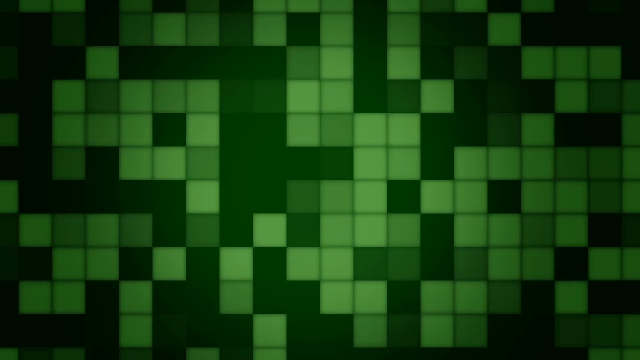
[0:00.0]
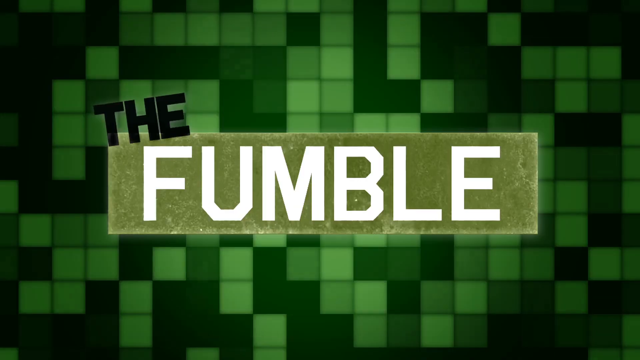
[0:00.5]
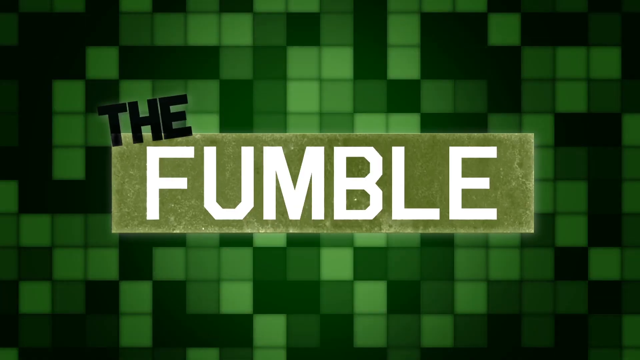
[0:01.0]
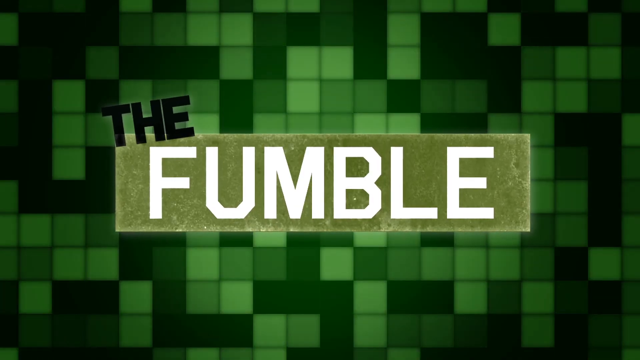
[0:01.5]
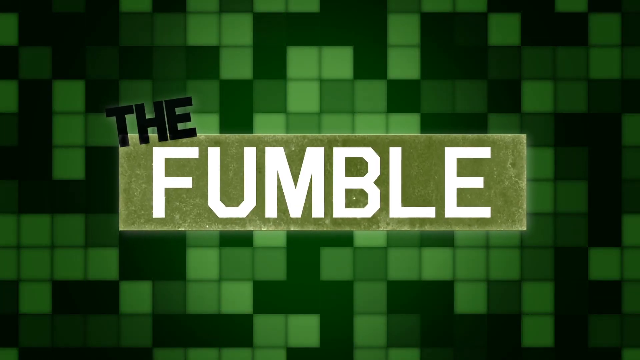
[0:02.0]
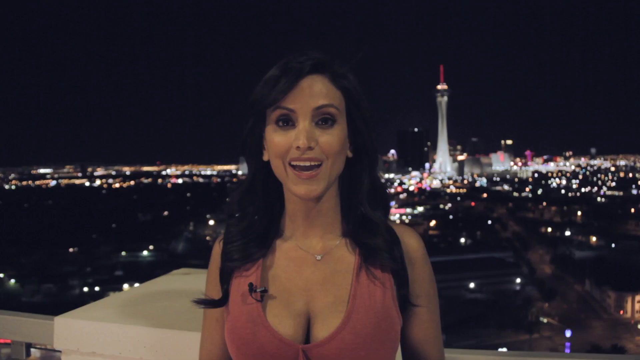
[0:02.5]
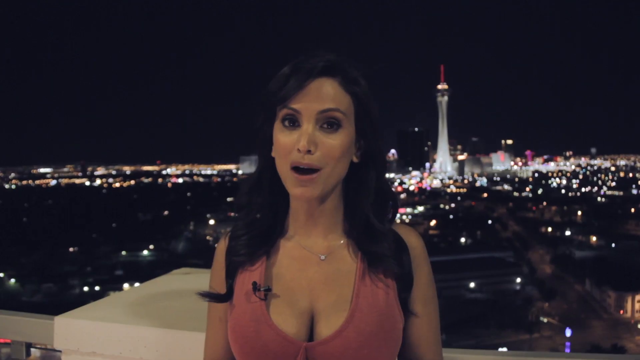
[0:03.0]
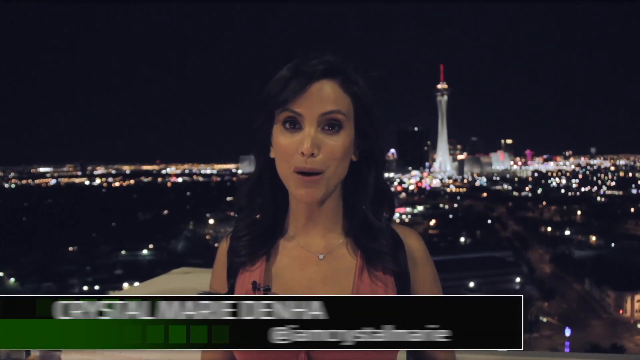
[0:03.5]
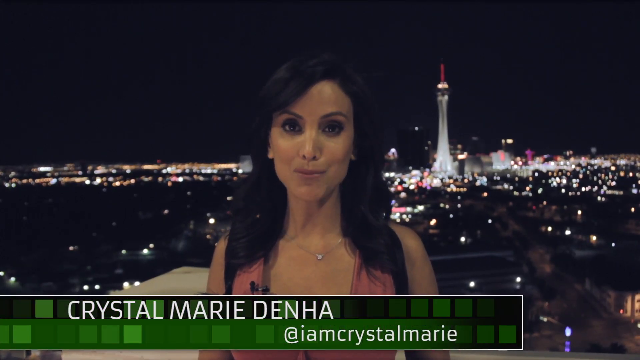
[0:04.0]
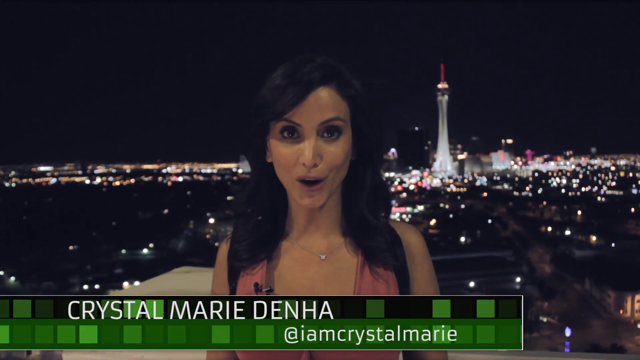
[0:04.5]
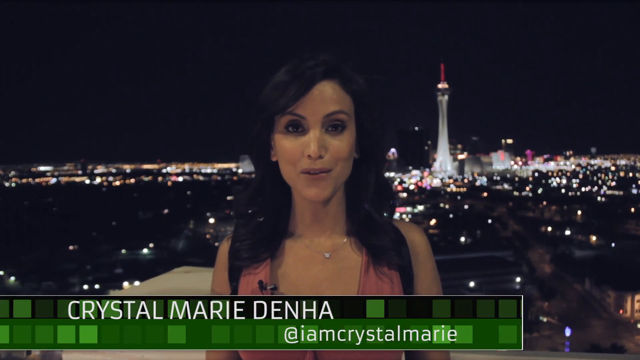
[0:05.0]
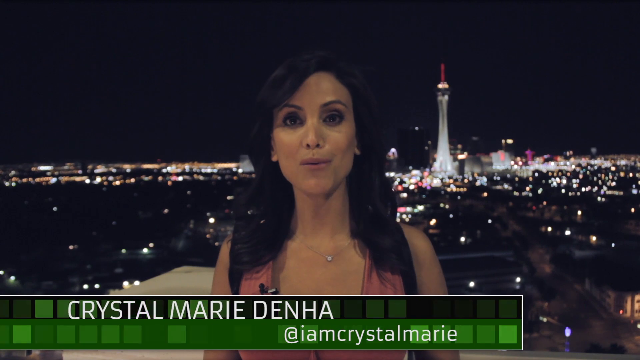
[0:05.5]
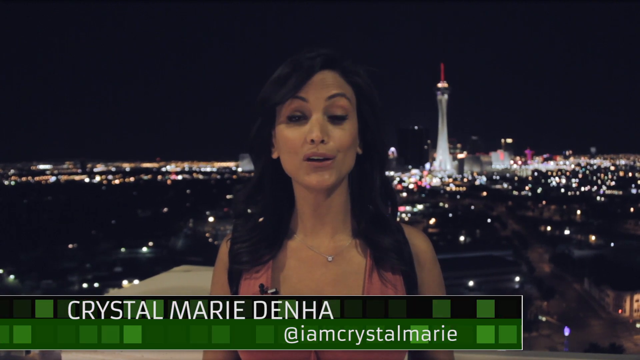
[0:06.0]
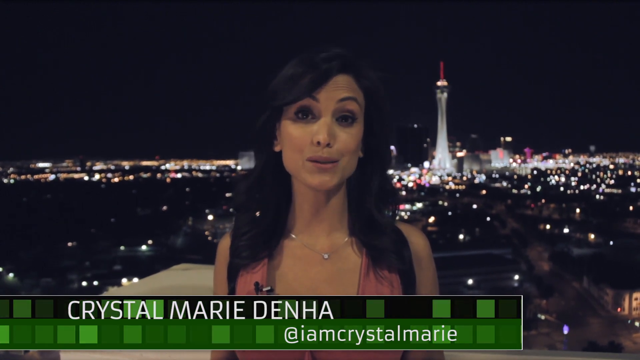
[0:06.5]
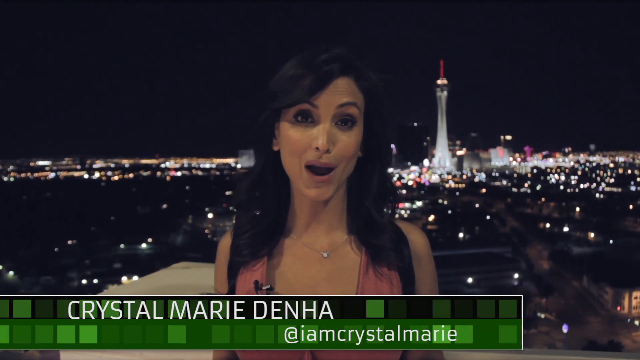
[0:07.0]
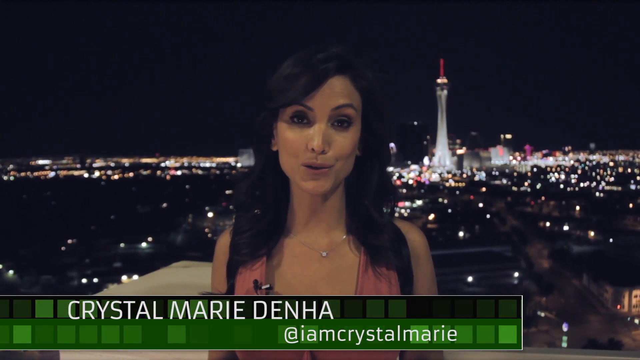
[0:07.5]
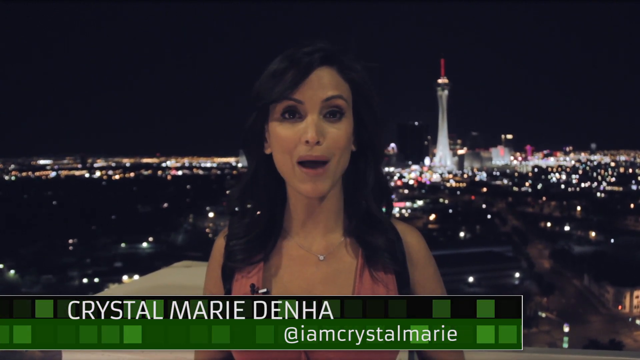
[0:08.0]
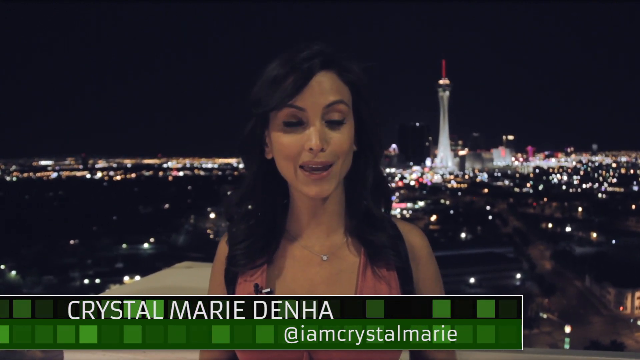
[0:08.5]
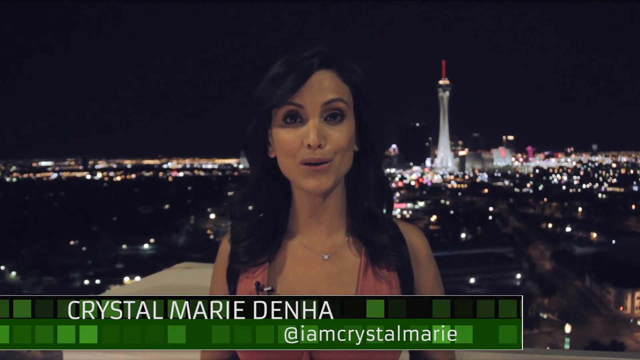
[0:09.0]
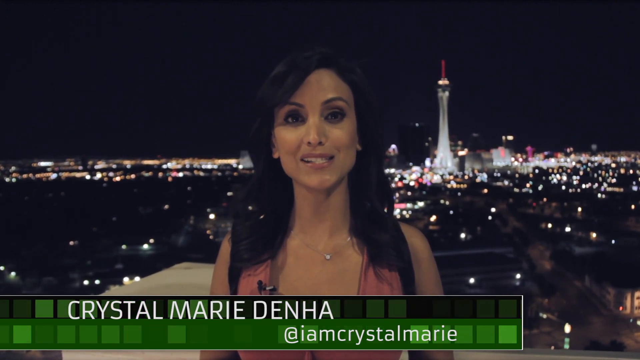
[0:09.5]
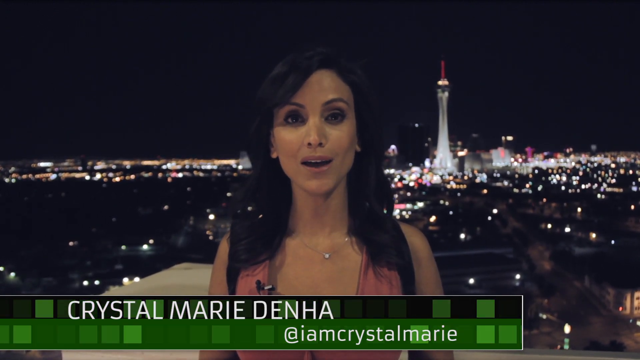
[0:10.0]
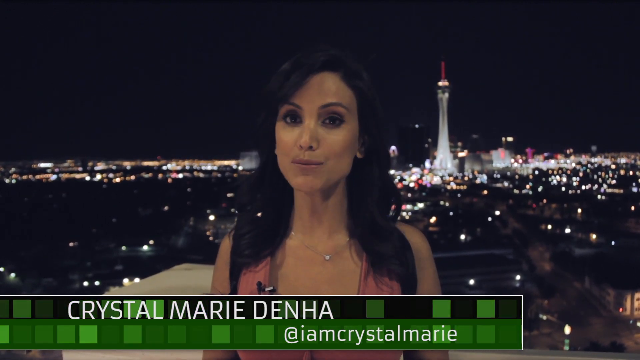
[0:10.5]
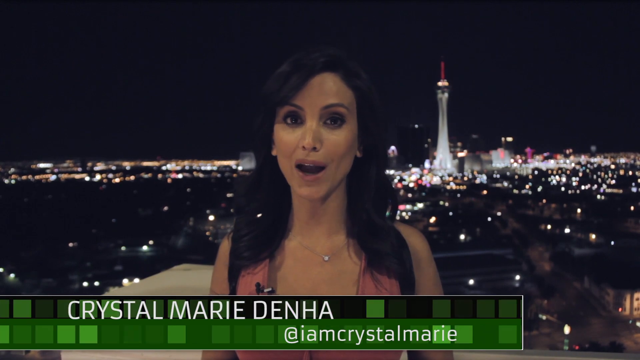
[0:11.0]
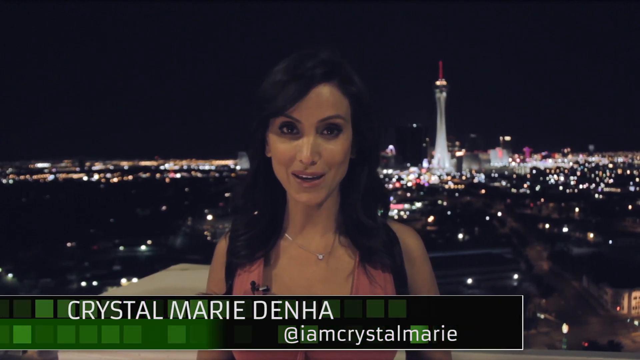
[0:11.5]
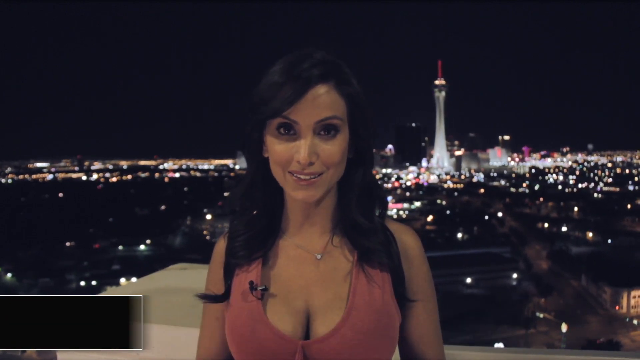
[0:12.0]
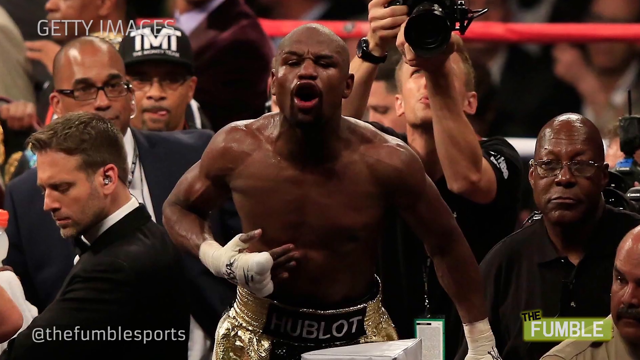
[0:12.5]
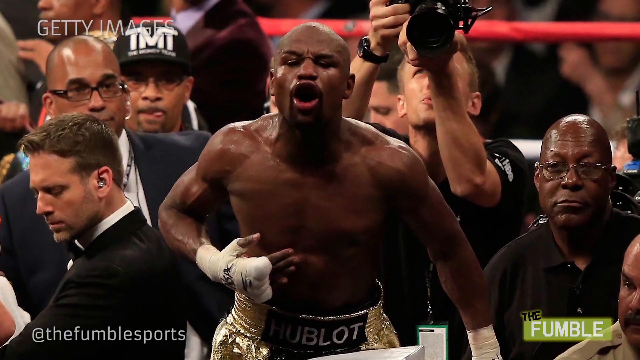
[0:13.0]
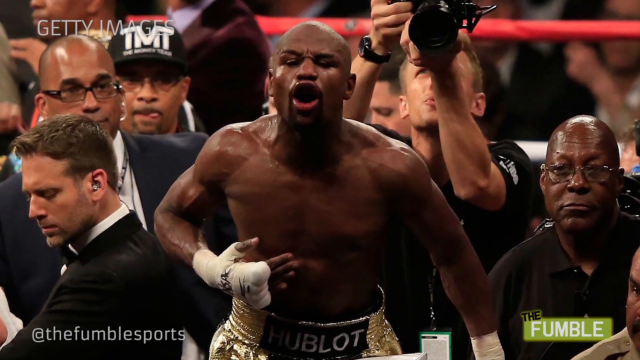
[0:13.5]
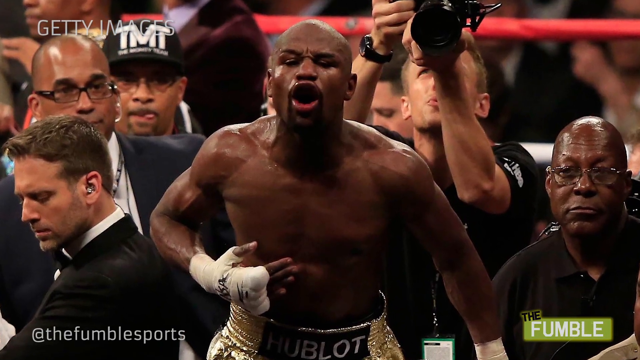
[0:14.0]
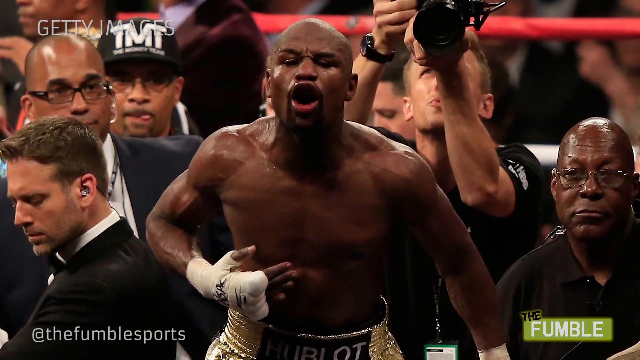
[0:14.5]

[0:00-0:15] The video opens in the style of a TV news report. A woman who looks to be in her late thirties and appears to be of Latino descent is tan and has dark black hair. Behind her is a nighttime cityscape with a large tower building in the distance. She looks toward the camera, a microphone attached to her, while talking. Her name appears across the bottom left corner of the screen: "Crystal Marie Denha". The scene switches to a photograph of a black male boxer with his mouth wide open as though he is shouting. He is dressed for a boxing match and has visible sweat on his body, and he is surrounded by paparazzi and team members. The scene then changes to a green animated intro titled "The Fumble".